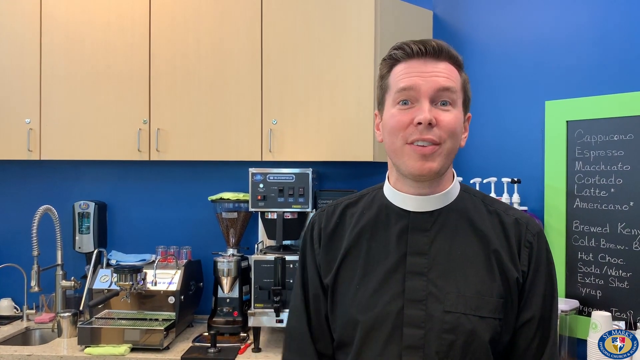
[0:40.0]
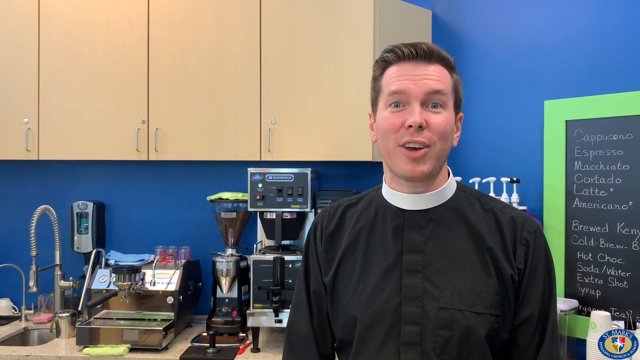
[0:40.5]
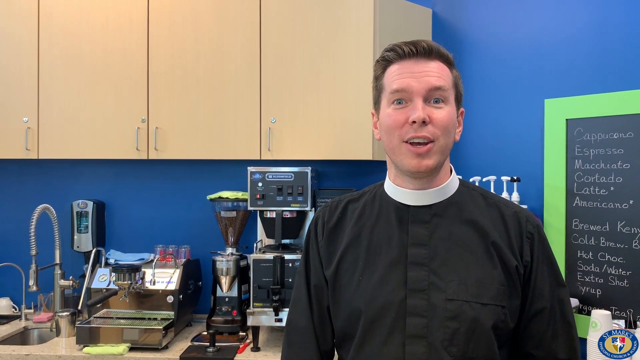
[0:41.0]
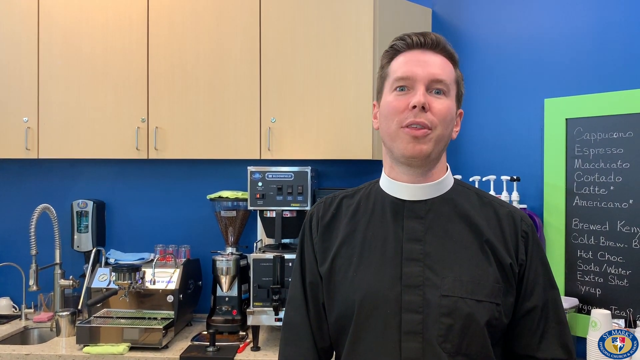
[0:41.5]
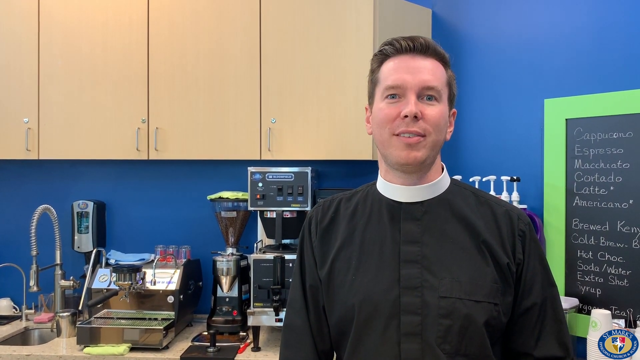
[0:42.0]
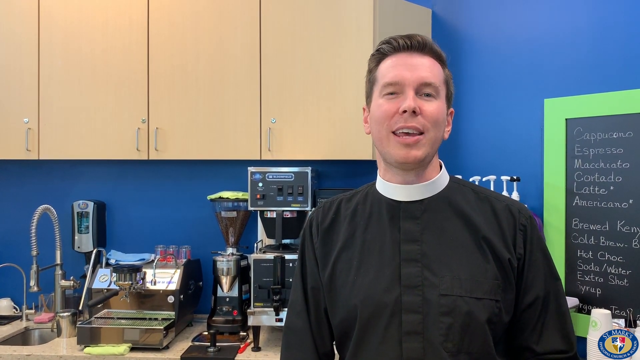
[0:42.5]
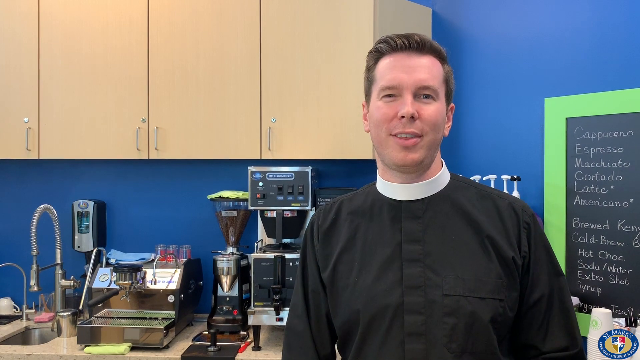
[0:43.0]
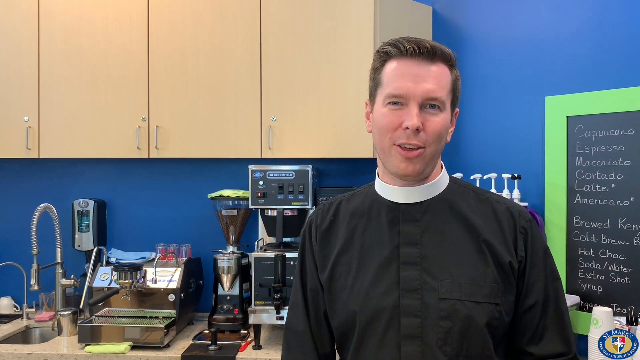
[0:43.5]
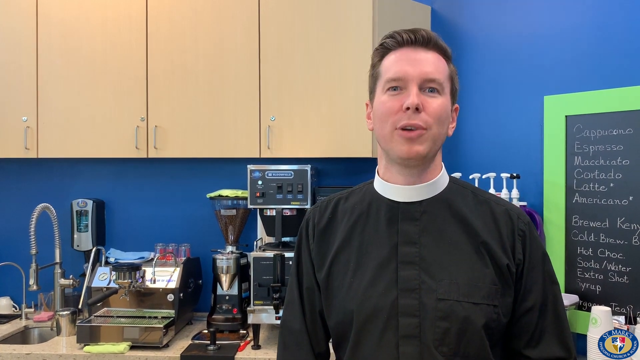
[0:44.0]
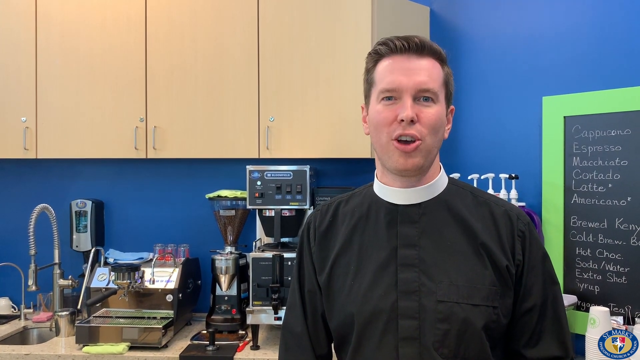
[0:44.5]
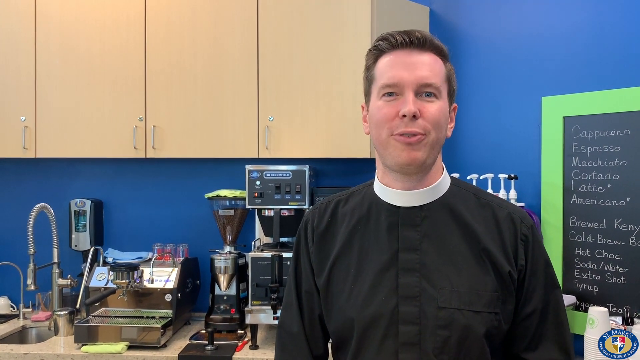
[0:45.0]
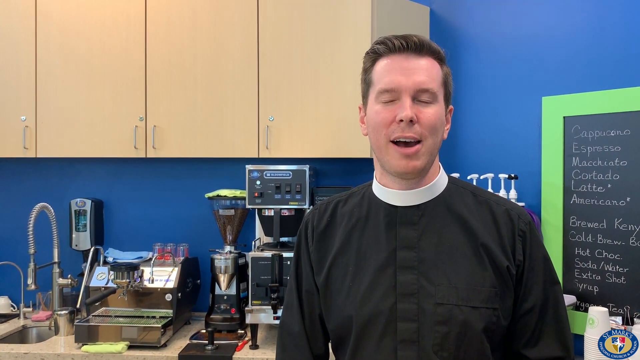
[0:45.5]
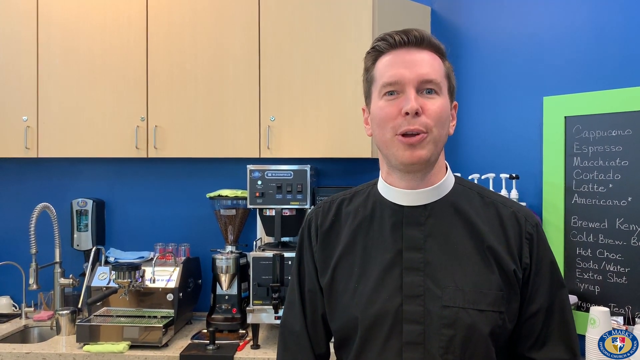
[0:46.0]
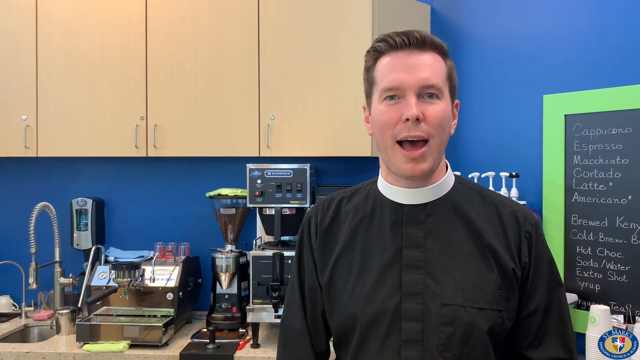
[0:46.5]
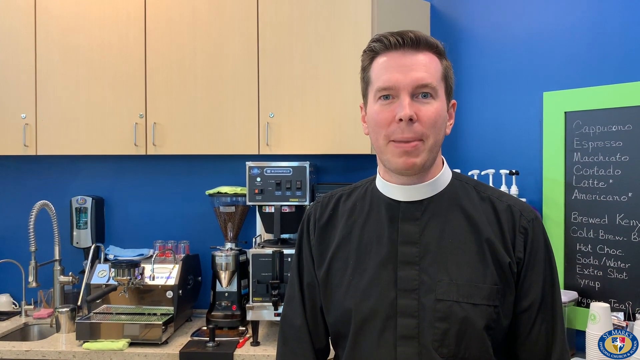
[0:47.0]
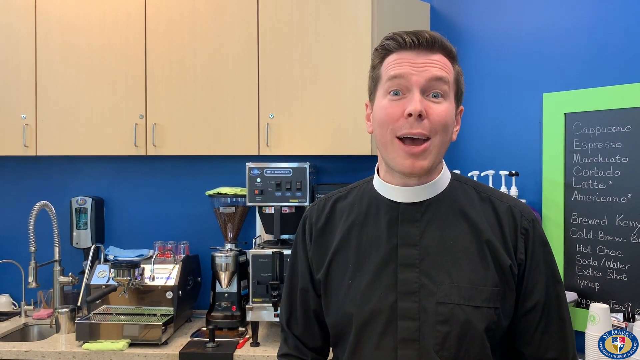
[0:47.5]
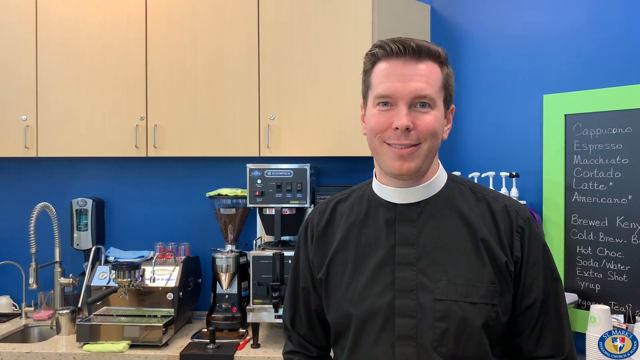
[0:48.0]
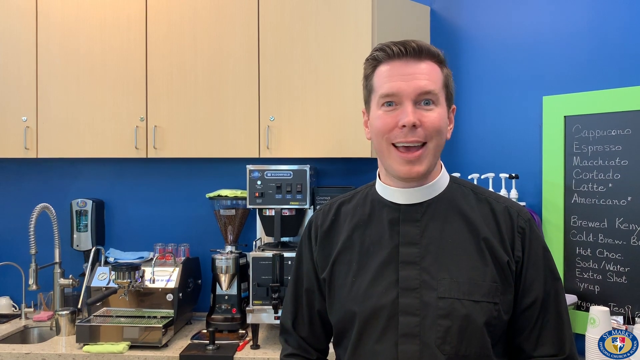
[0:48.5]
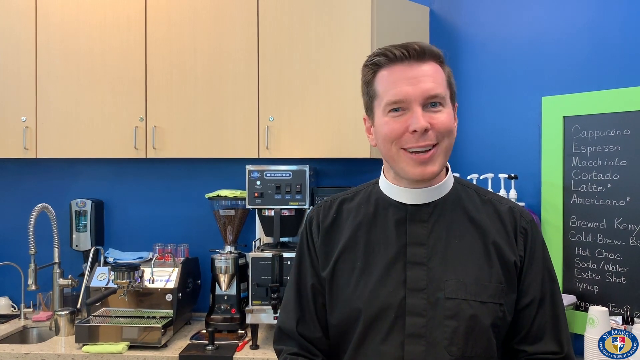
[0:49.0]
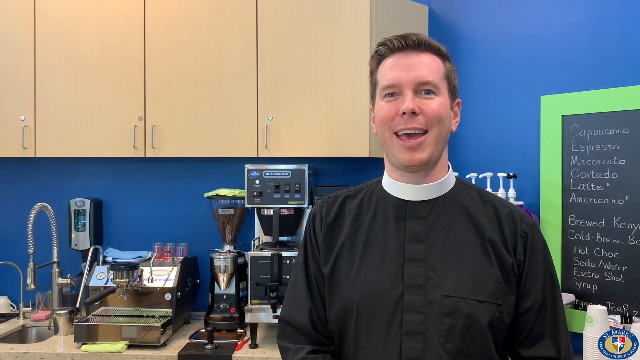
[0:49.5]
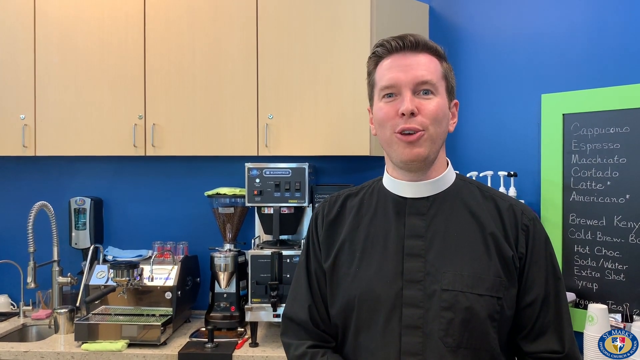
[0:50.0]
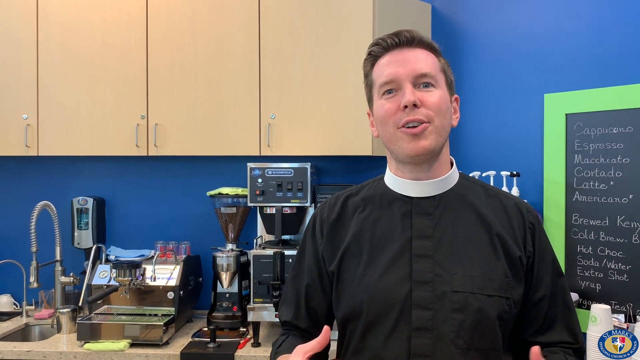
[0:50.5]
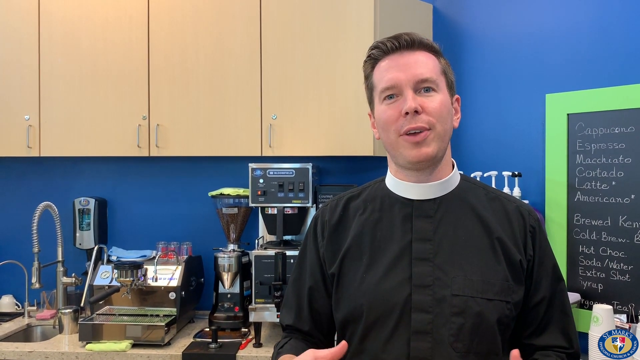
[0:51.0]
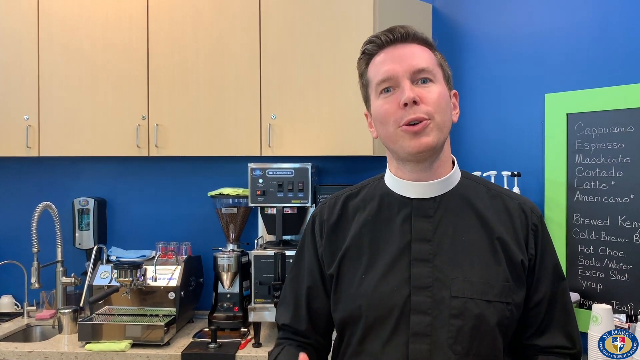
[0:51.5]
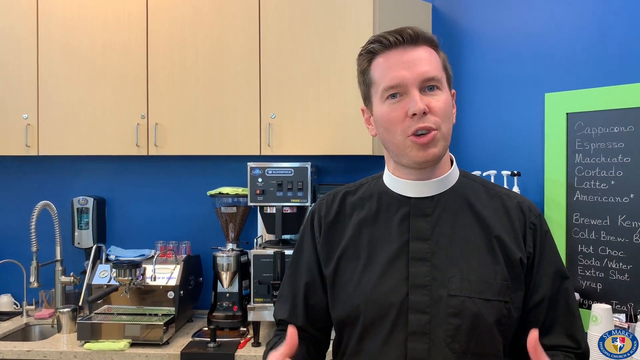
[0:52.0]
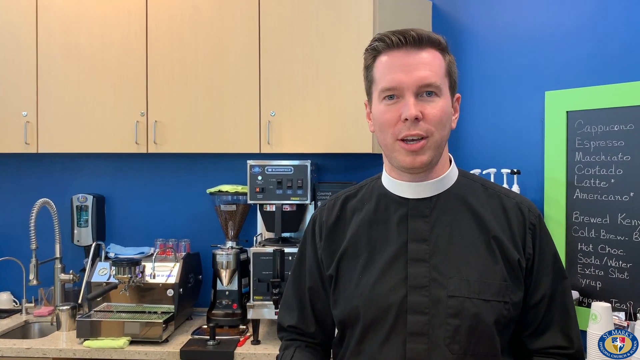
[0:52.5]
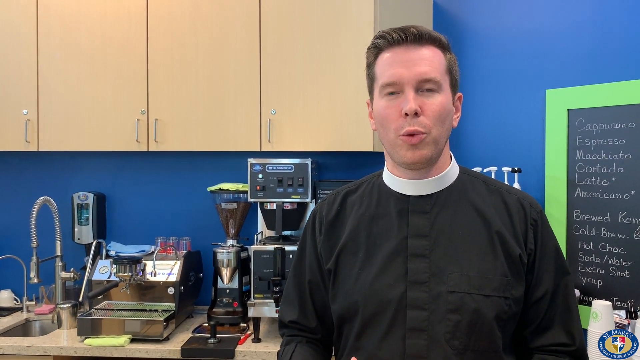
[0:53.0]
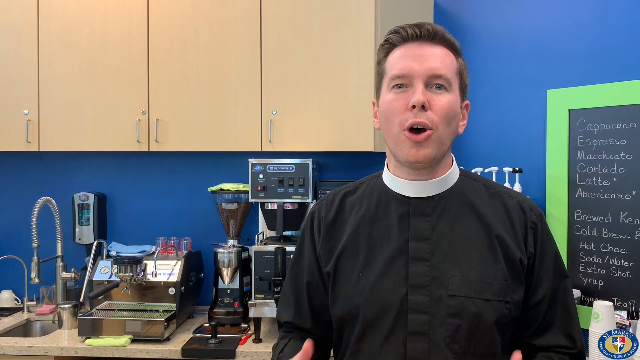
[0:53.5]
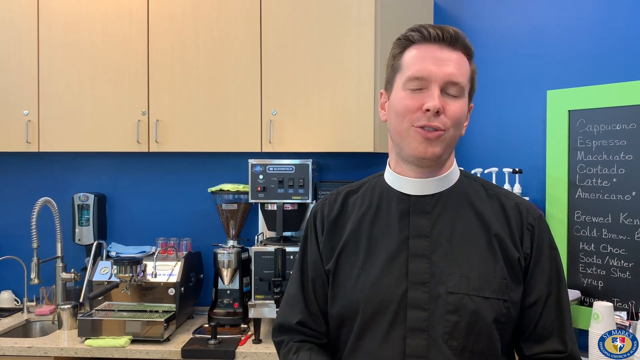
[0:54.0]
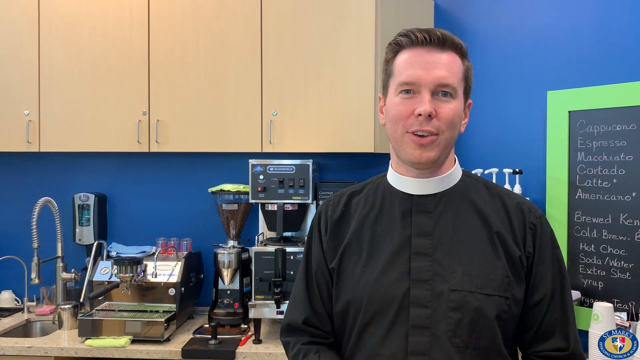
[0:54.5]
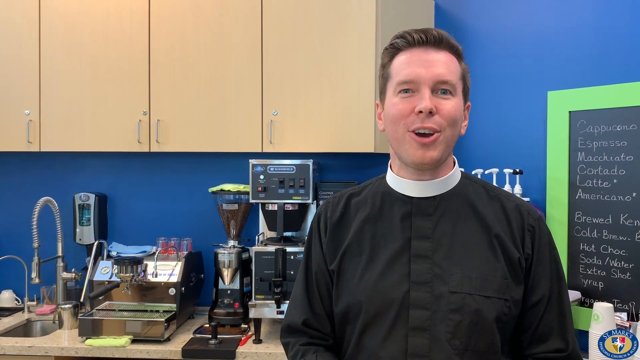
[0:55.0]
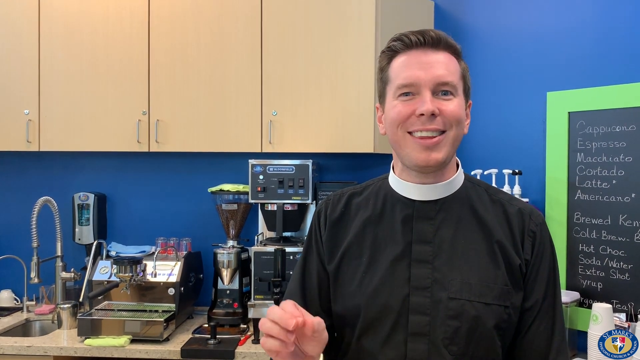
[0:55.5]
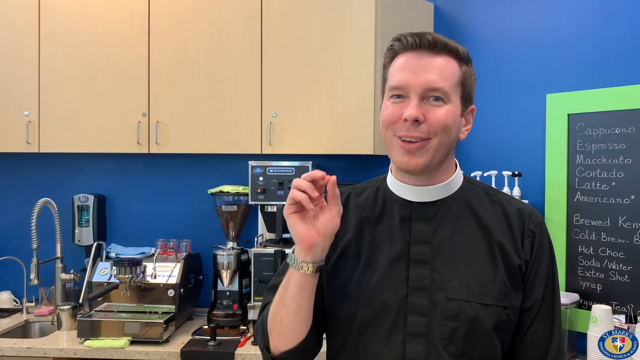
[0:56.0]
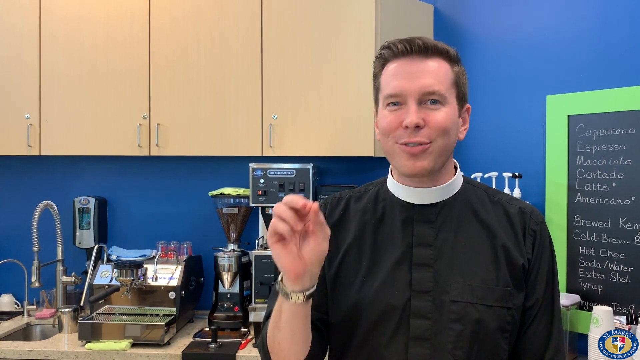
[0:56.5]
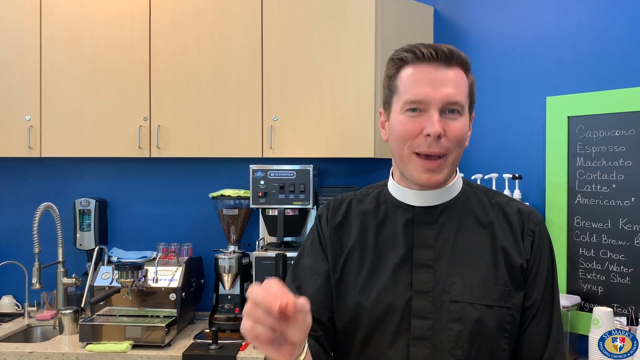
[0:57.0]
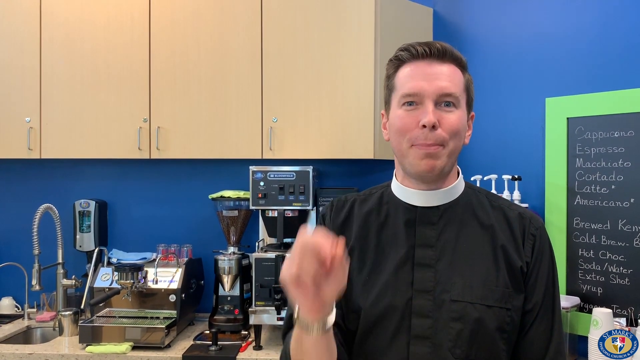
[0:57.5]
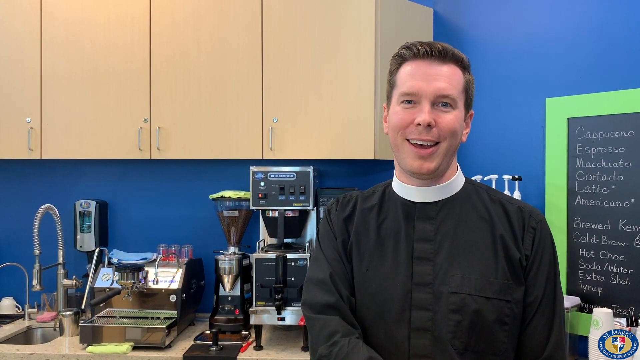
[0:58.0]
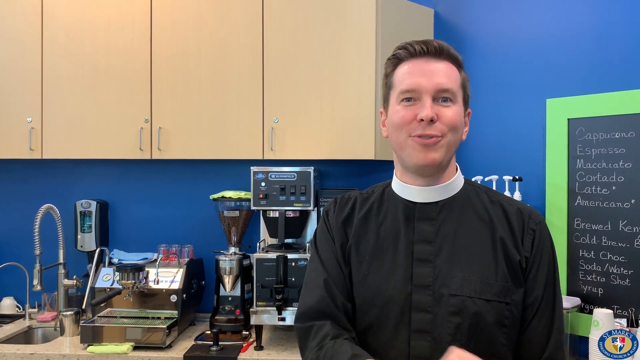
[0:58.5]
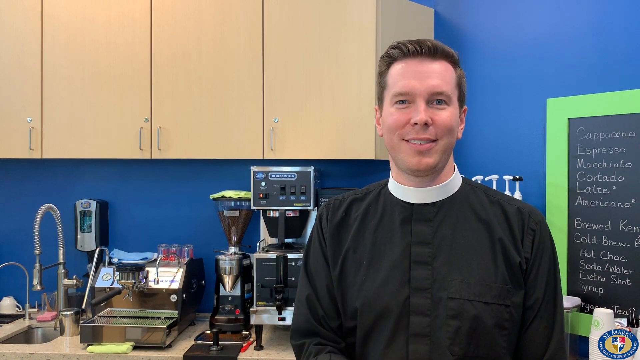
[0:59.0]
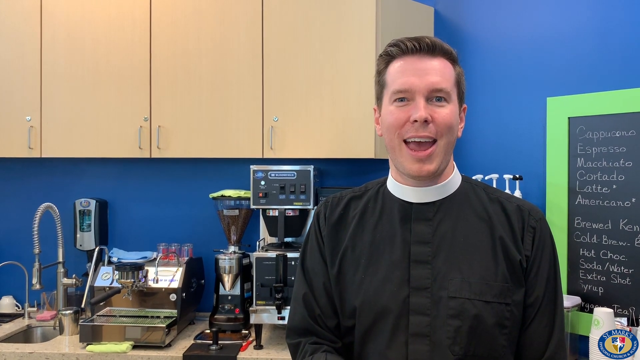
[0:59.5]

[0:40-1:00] The Reverend continues the segment with no overlaid text or subtitles, looking engaged and happy throughout, with an upbeat manner. Behind him are three or four different coffee and espresso machines. The one closer to the sink looks like an espresso machine with three tubes on the top corner. The second looks like a single-serve machine, with a funnel filled with beans. The third, with more switches and dials, looks like it is probably for a double espresso or something more complicated.